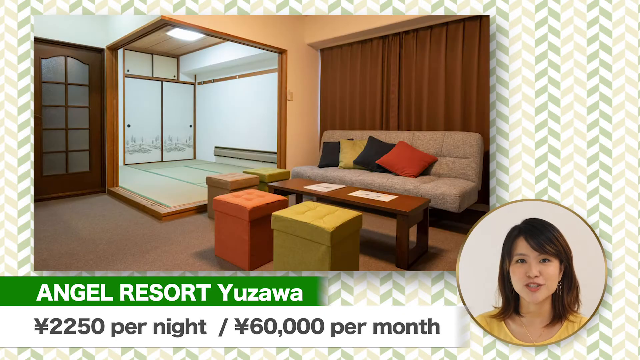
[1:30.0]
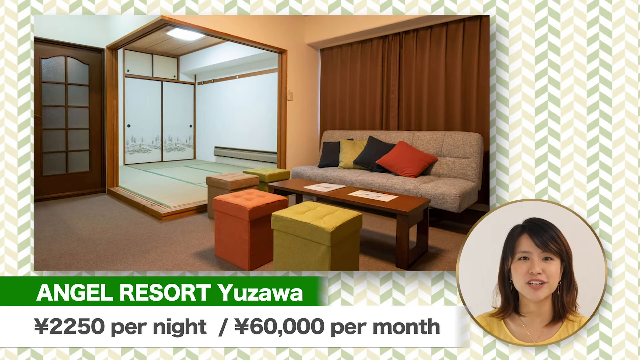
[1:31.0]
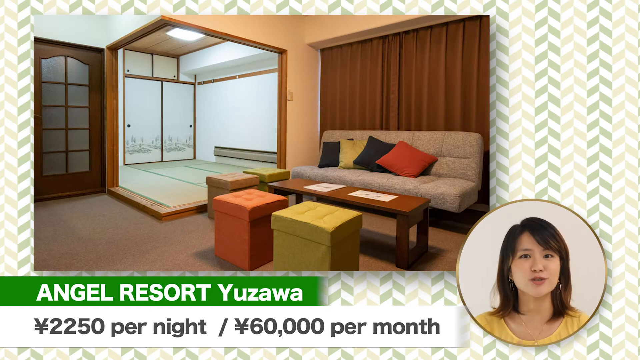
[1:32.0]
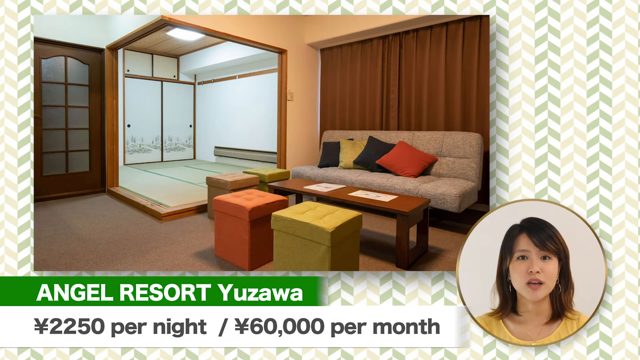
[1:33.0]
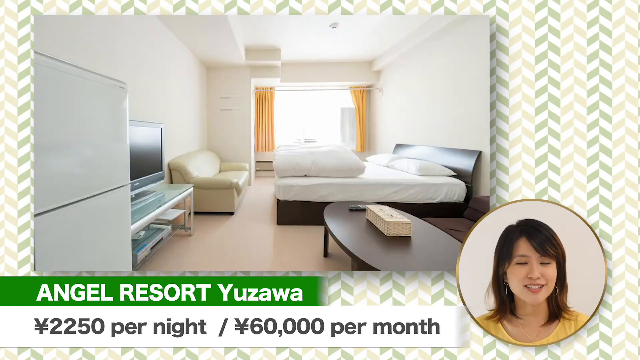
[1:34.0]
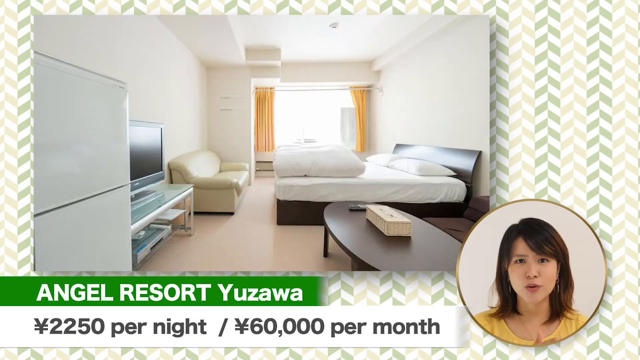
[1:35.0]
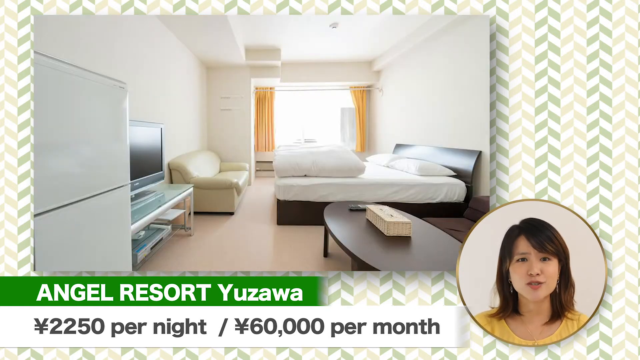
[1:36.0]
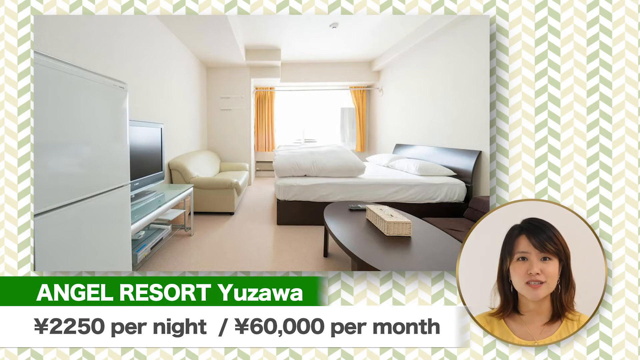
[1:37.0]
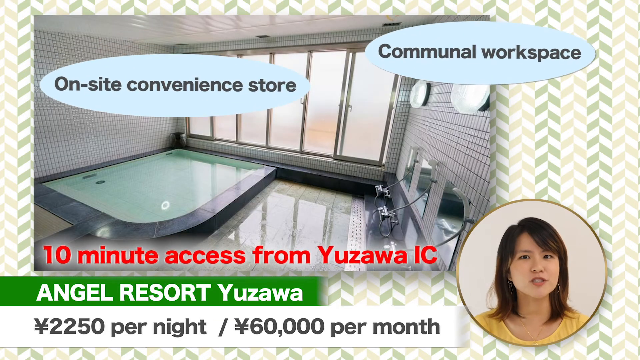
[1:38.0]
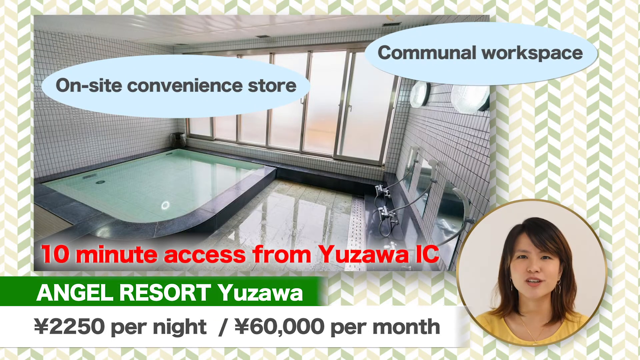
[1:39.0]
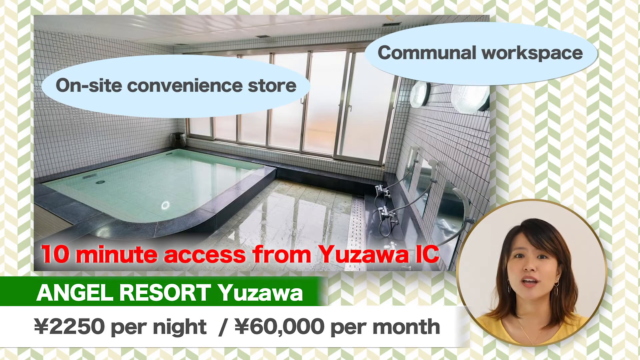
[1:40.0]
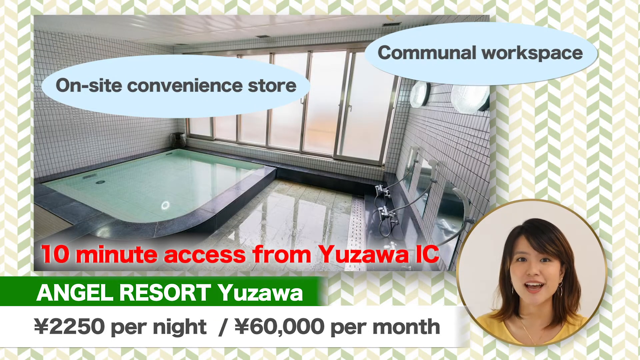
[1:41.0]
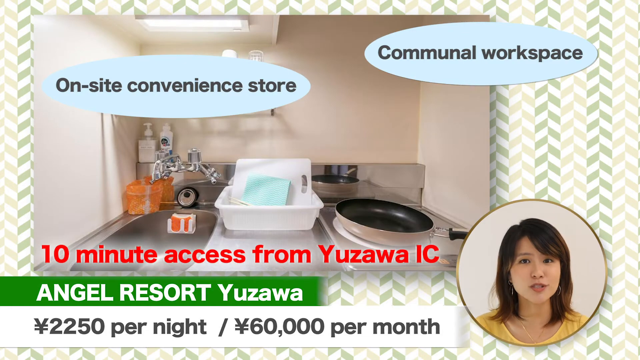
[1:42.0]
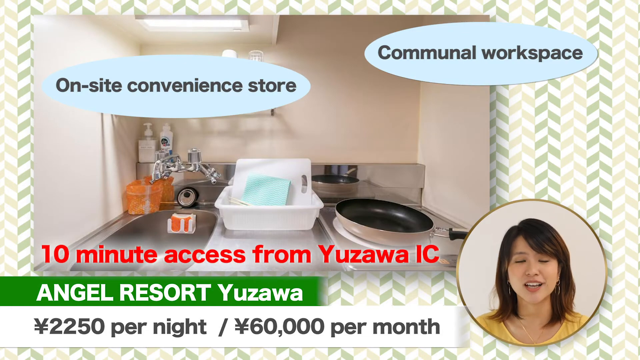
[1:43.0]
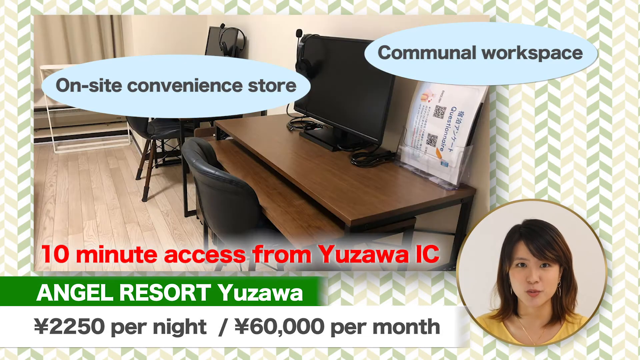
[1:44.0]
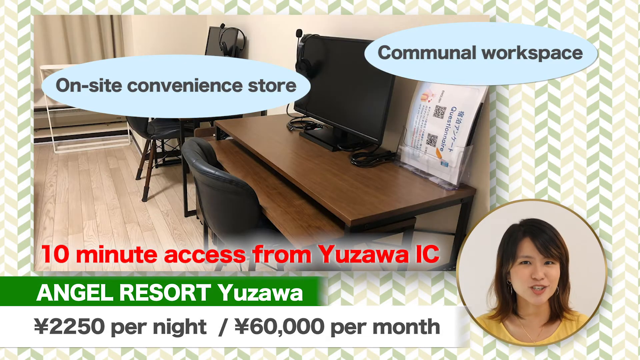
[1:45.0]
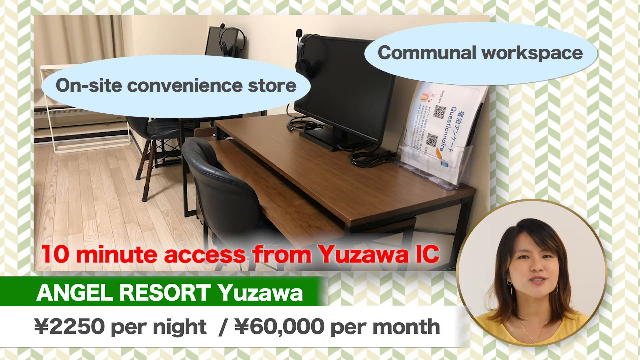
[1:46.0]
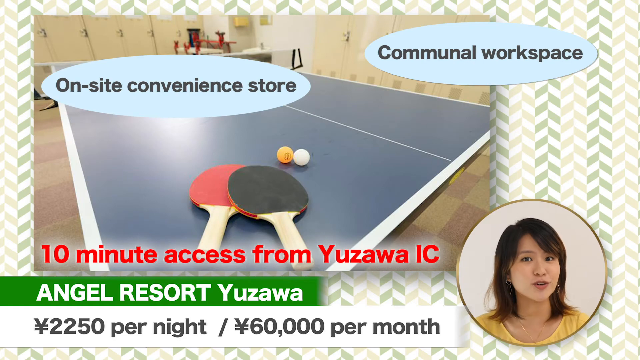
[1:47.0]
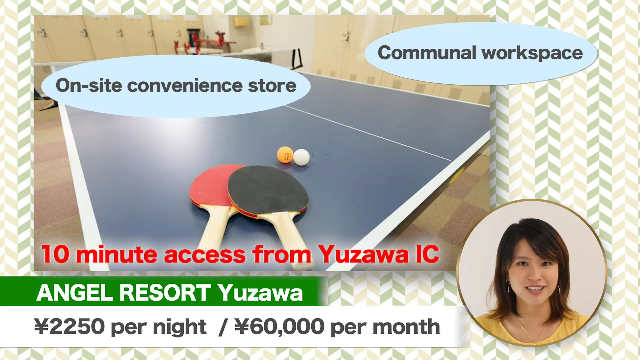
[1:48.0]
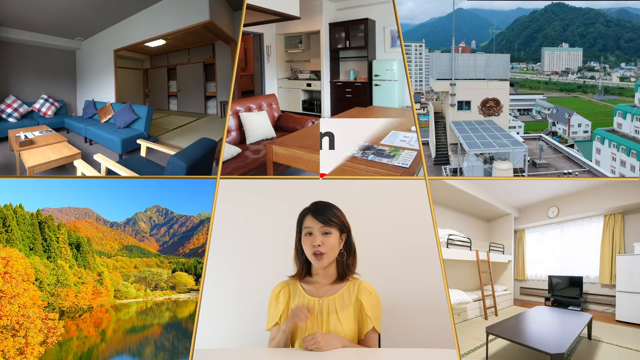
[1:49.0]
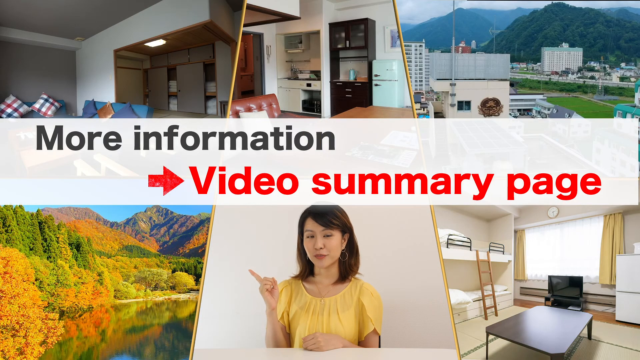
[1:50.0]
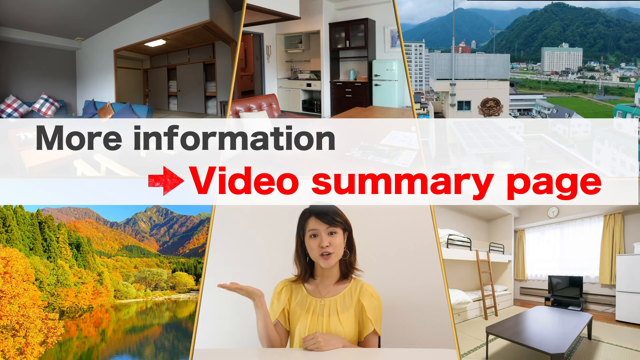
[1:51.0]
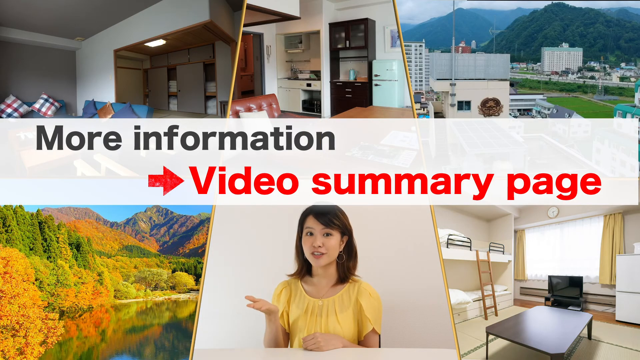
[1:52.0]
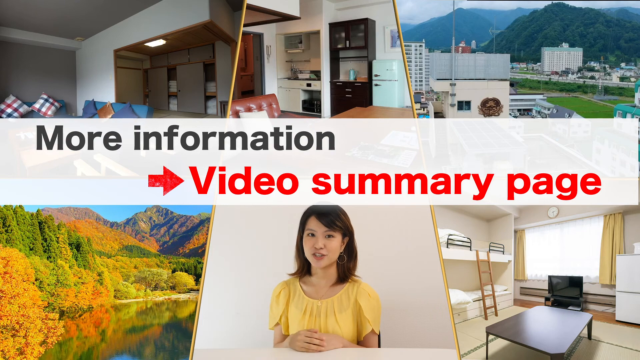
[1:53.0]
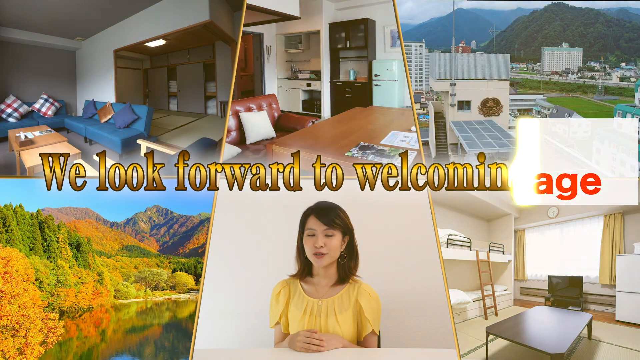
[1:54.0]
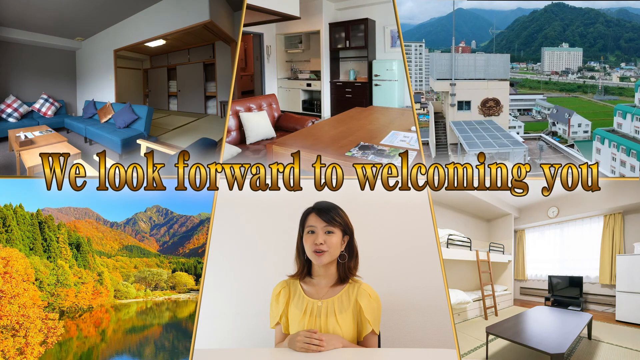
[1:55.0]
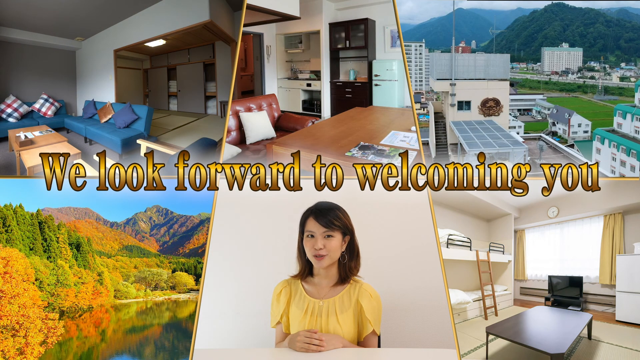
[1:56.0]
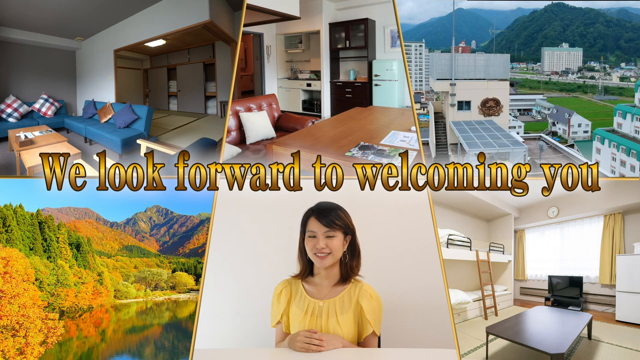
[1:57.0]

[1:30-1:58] Another room in the resort is shown, which looks like an efficiency, with the refrigerator, the bed and the couch all in one room. On-site amenities are presented, including a convenience store and a communal workspace, with the same narrator, and the line "We look forward to welcoming you." A bigger, somewhat nicer-looking room is shown, then the efficiency is shown again. The listed amenities include ten minutes from Yuzawa, an on-site convenience store, a swimming pool, a small communal workspace and ping pong. A picture of the surrounding countryside with mountains follows.